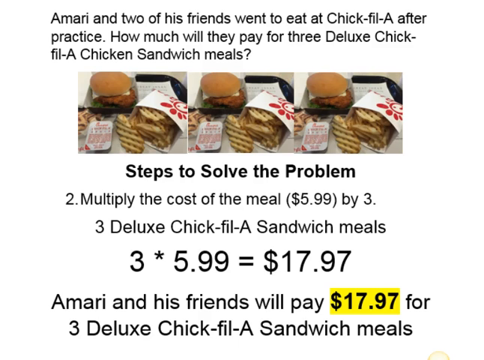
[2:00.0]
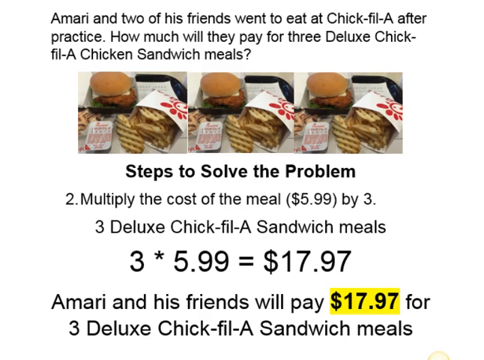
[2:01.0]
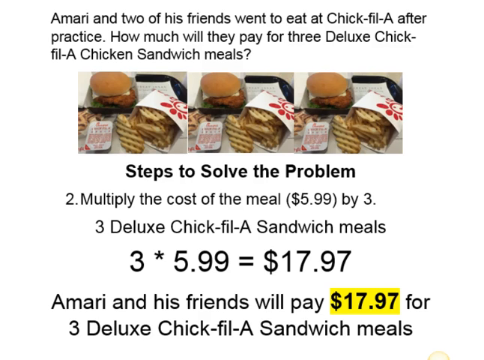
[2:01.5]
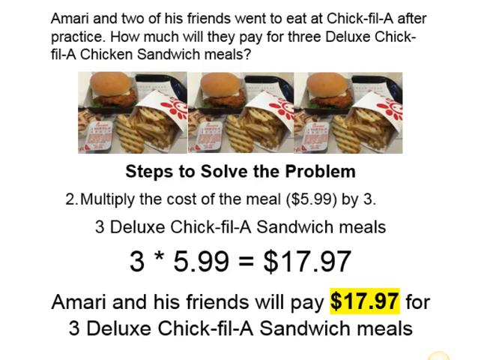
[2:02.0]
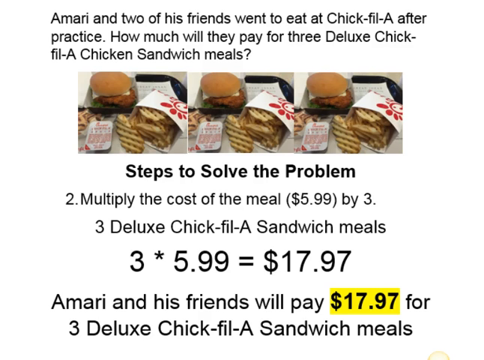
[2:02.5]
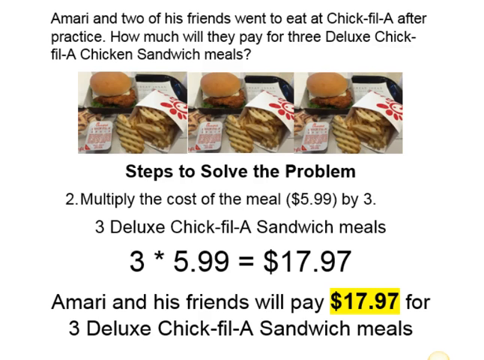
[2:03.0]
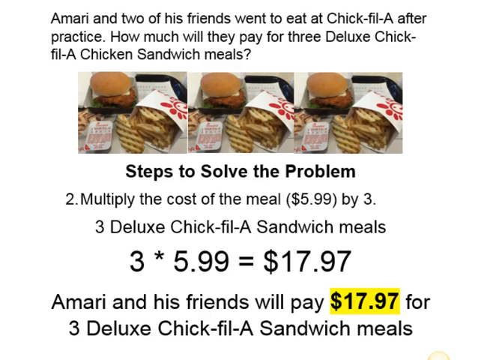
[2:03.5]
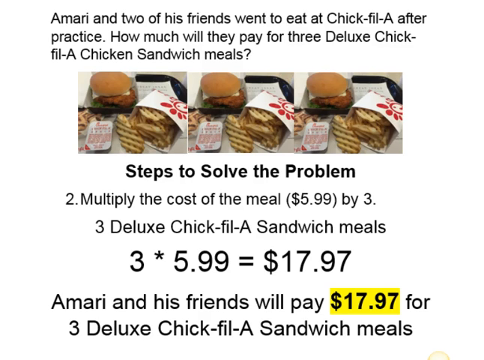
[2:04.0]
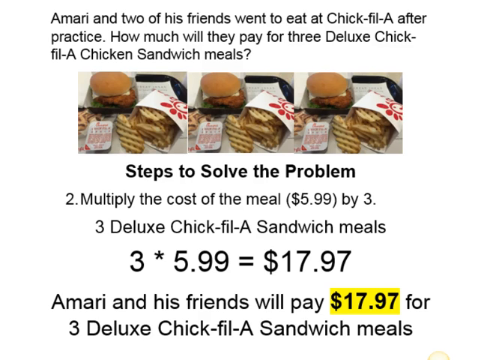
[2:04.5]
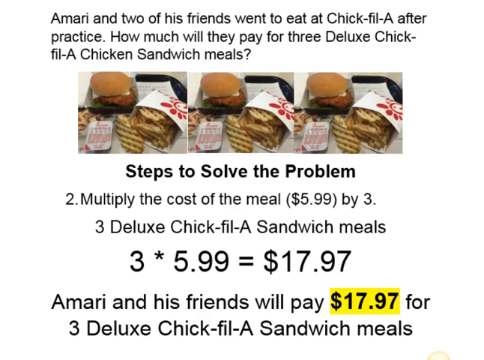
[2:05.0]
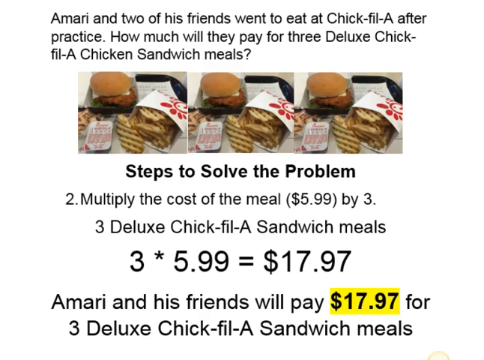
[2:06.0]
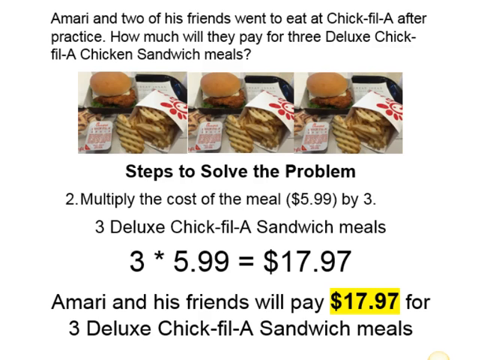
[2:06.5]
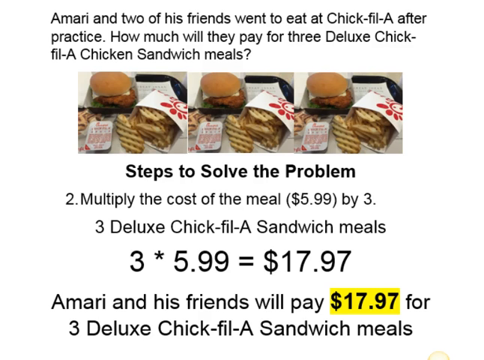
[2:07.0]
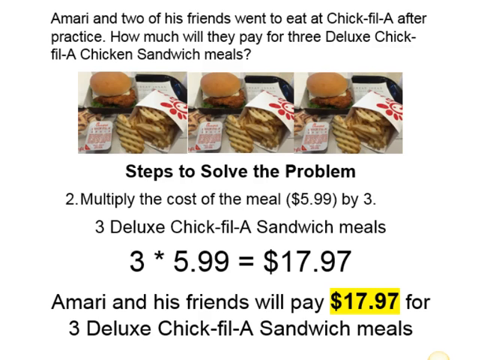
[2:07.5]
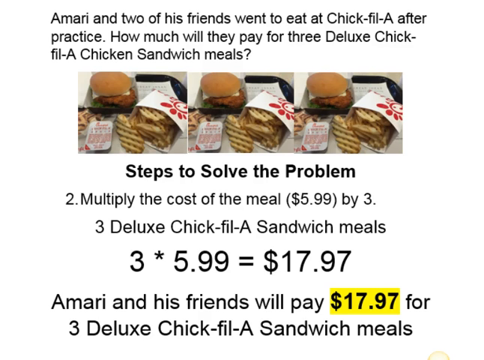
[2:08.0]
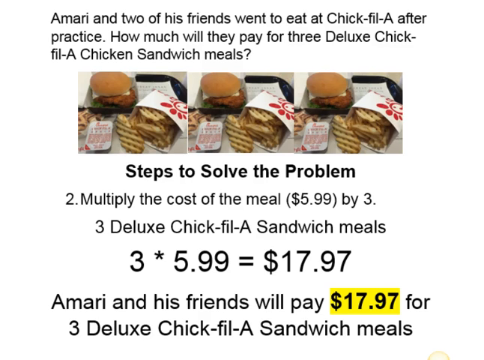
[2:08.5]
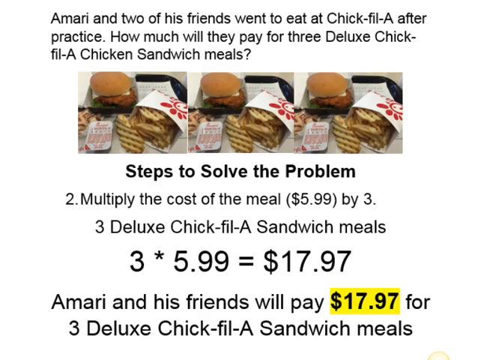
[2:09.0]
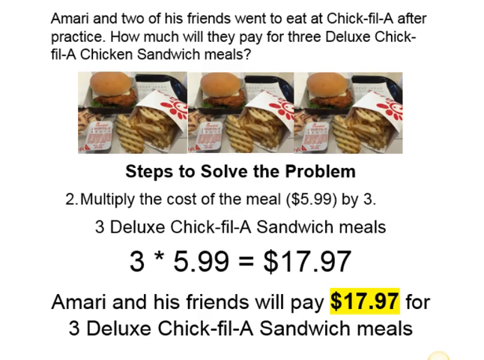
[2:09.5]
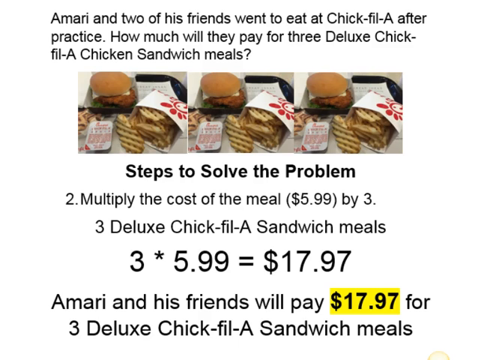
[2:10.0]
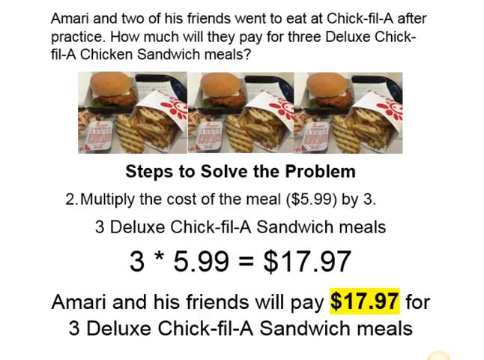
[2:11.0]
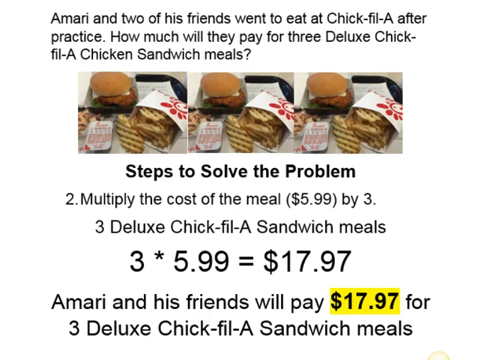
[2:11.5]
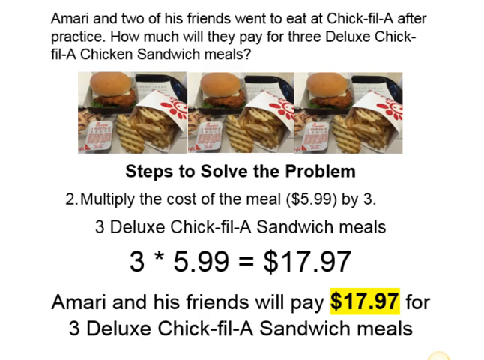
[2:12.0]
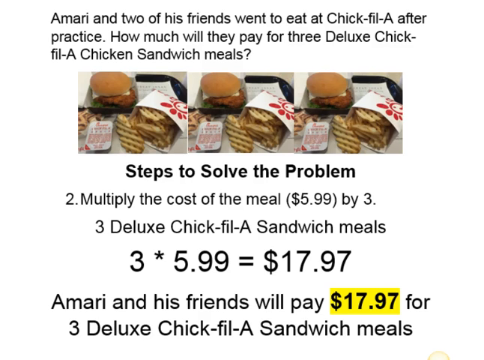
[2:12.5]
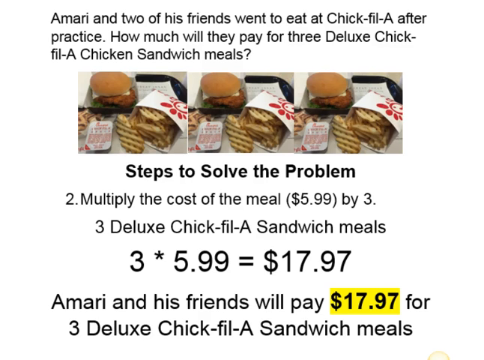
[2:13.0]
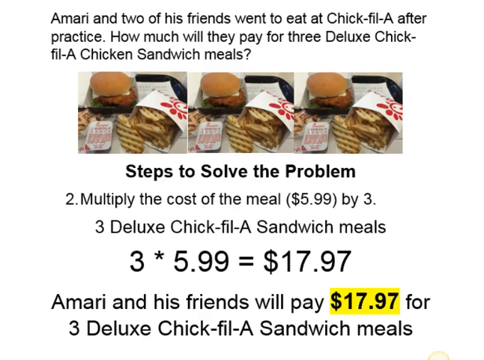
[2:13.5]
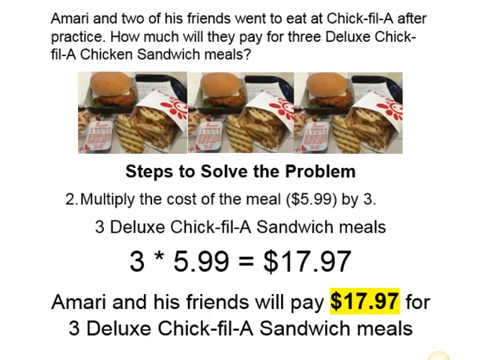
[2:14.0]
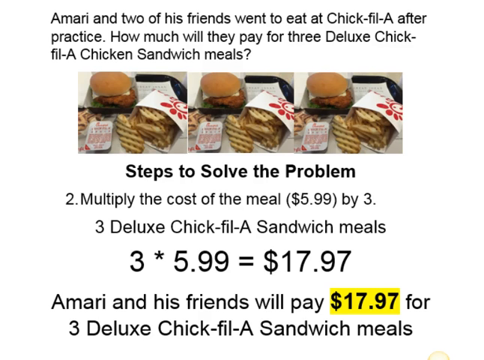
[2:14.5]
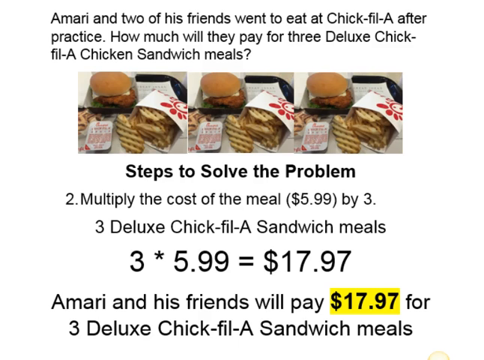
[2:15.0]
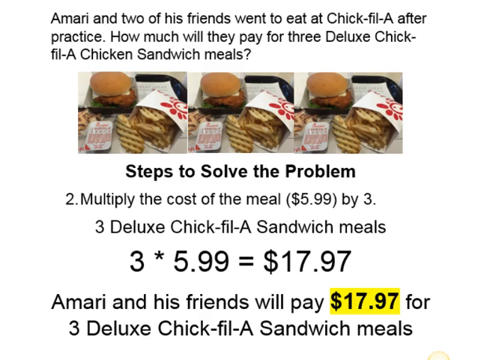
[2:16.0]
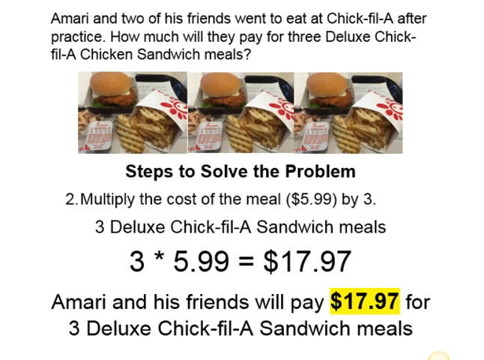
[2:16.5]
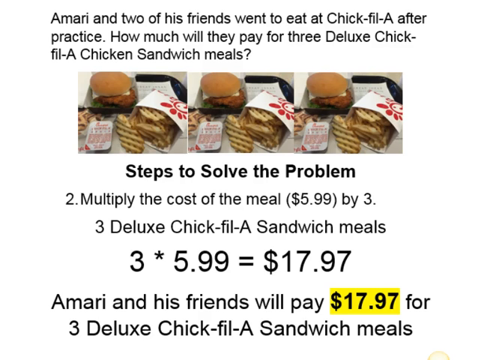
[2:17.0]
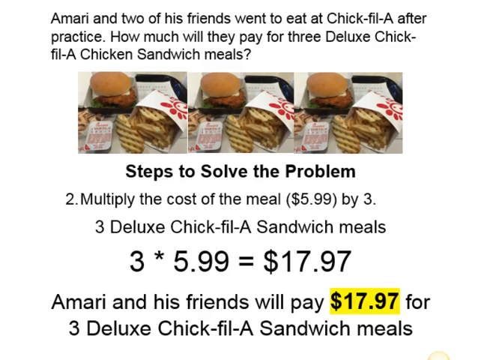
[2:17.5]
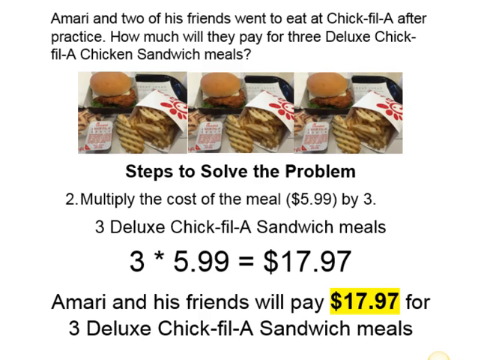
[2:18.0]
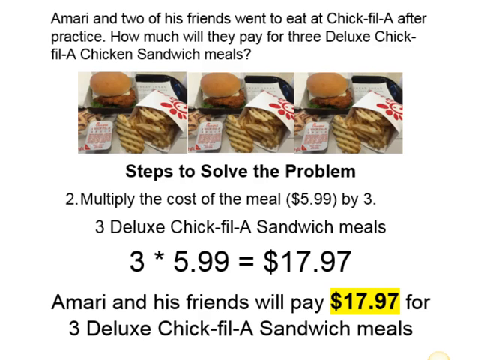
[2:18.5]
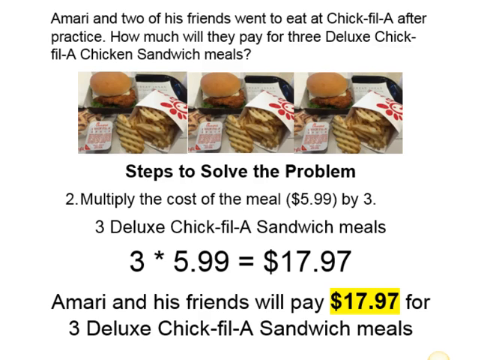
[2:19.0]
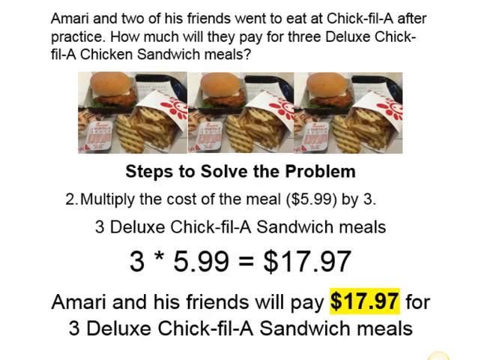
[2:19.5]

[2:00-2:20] The same shot continues: the three pictures of the same Chick-fil-A meals with the Chick-fil-A sandwich, the French fries and the small packet of sauce. The problem is written out at the top: "Amari and two of his friends went to eat at Chick-fil-A after practice. How much will they pay for three deluxe Chick-fil-A chicken sandwich meals?" Underneath the pictures, in bold, it says "steps to solve the problem." Number two is "multiply the cost of the meal, which is $5.99, by three." Step number three reads that deluxe Chick-fil-A sandwich meals are three for $5.99, which equals $17.97. Underneath that it says "Amari and his friends will pay $17.97 for three deluxe Chick-fil-A sandwich meals," with the $17.97 highlighted in bright yellow marker. Nothing changes.